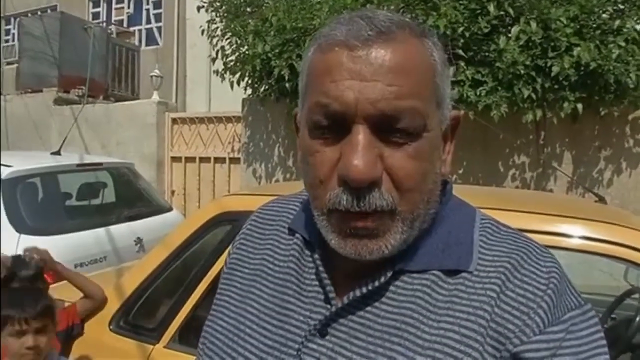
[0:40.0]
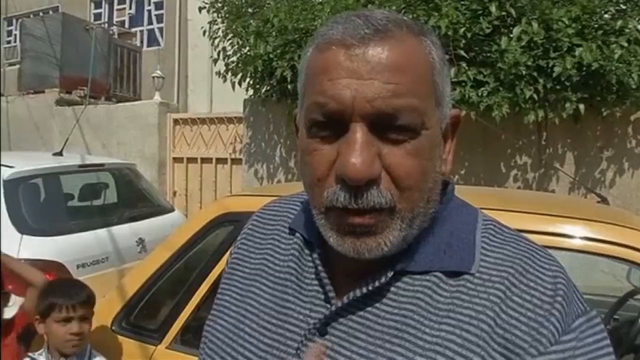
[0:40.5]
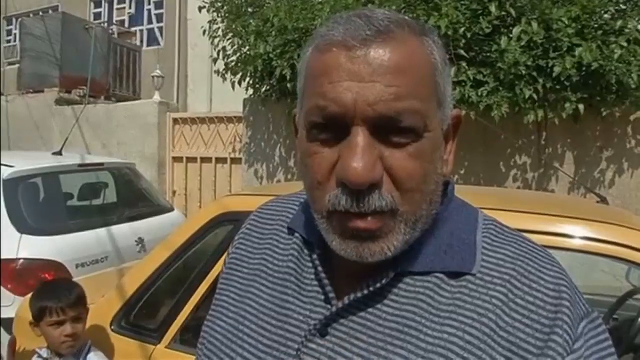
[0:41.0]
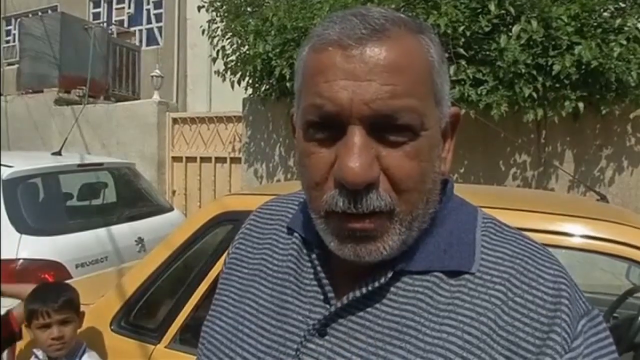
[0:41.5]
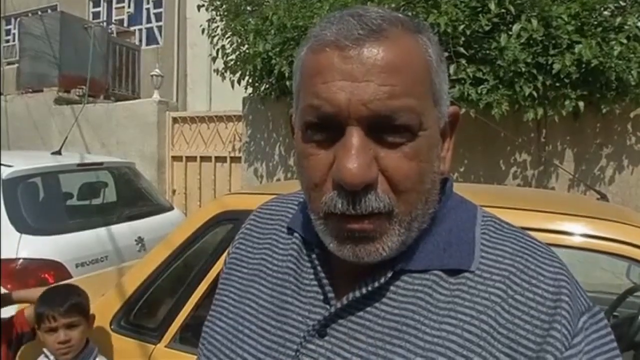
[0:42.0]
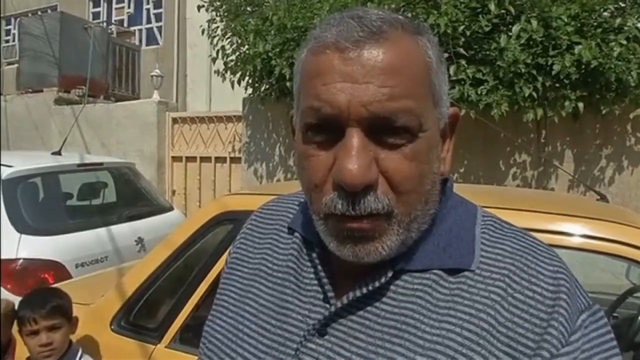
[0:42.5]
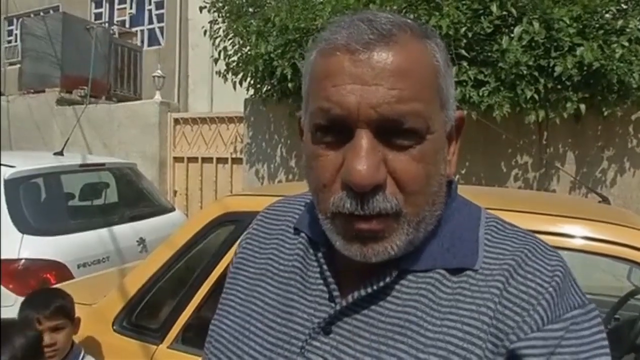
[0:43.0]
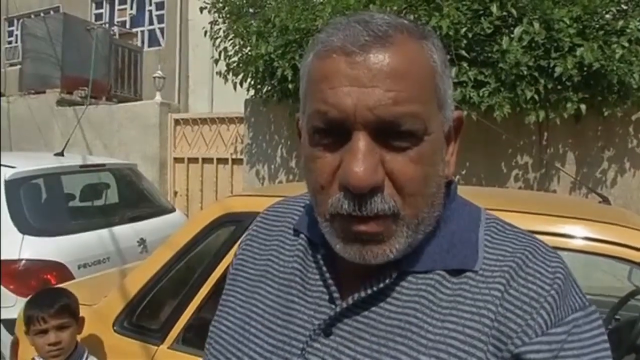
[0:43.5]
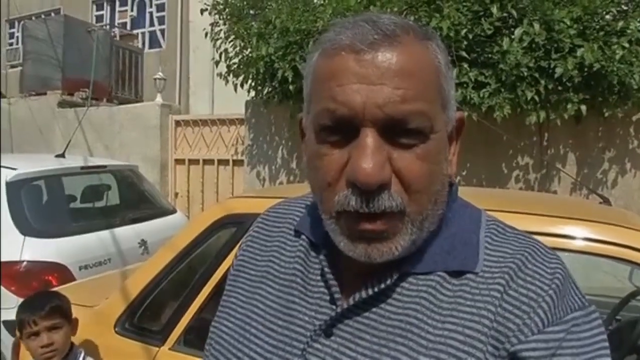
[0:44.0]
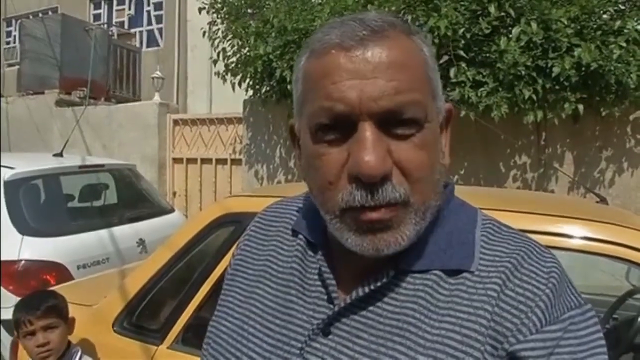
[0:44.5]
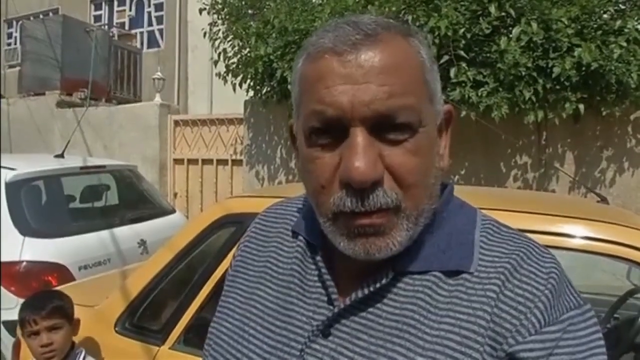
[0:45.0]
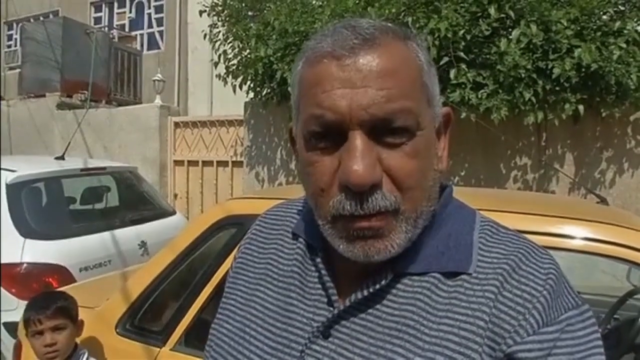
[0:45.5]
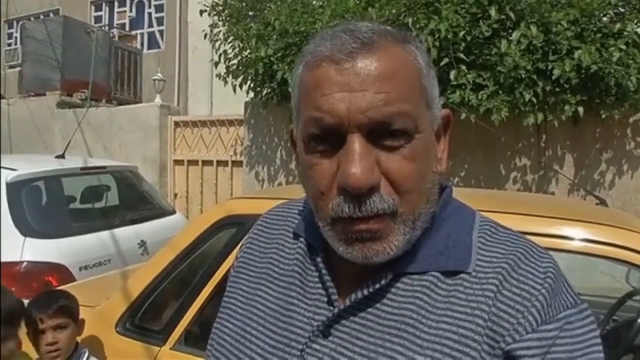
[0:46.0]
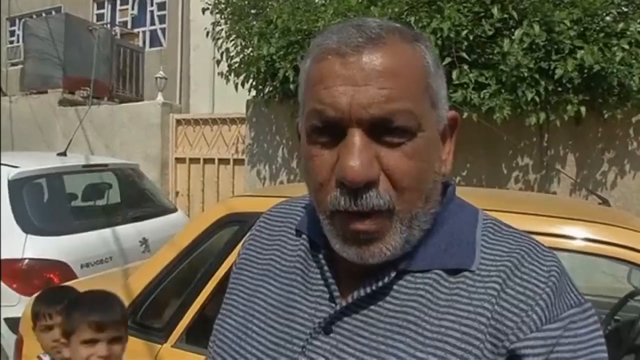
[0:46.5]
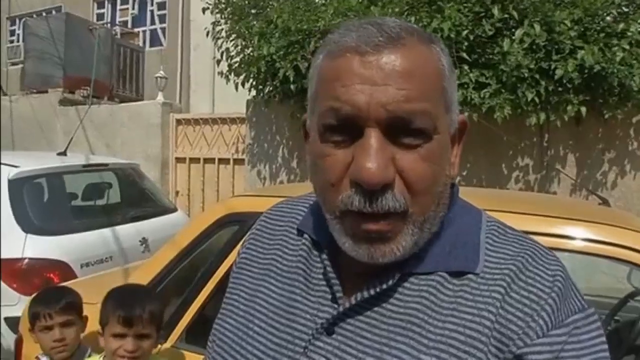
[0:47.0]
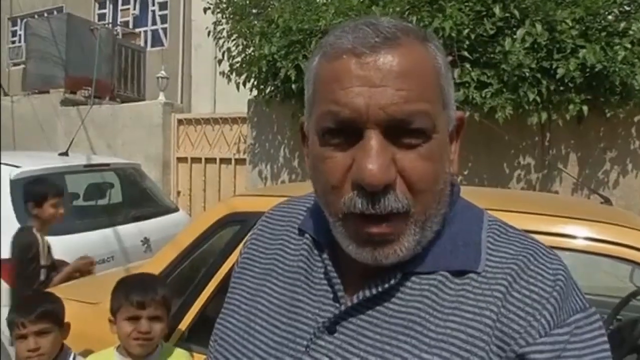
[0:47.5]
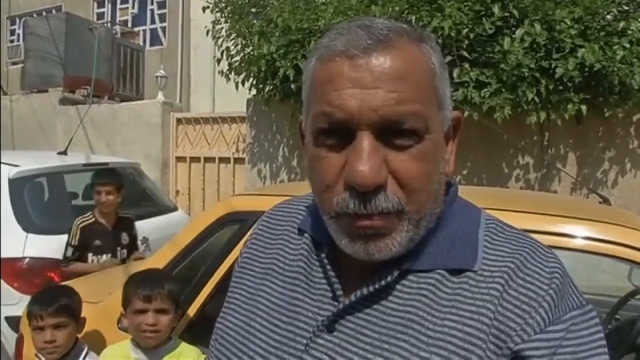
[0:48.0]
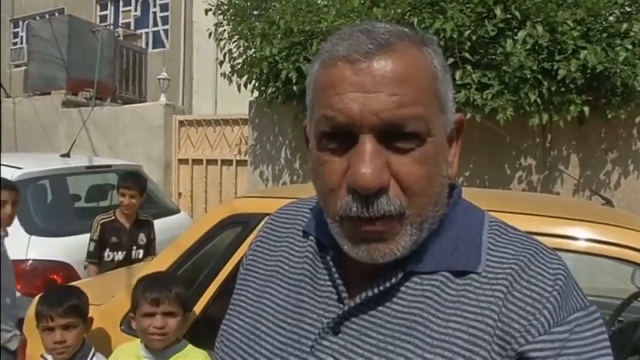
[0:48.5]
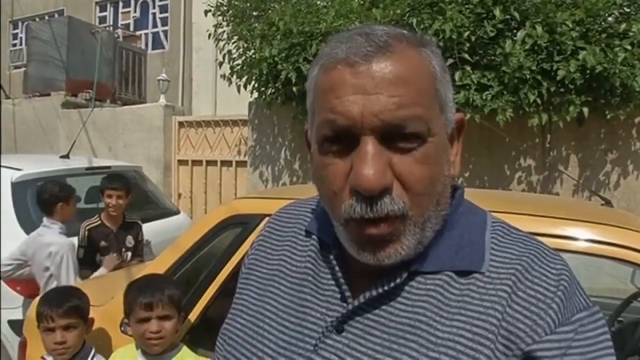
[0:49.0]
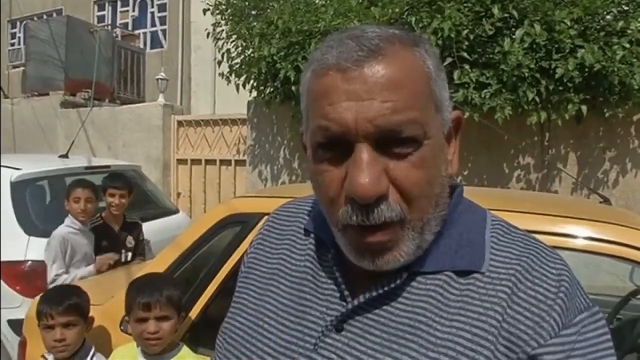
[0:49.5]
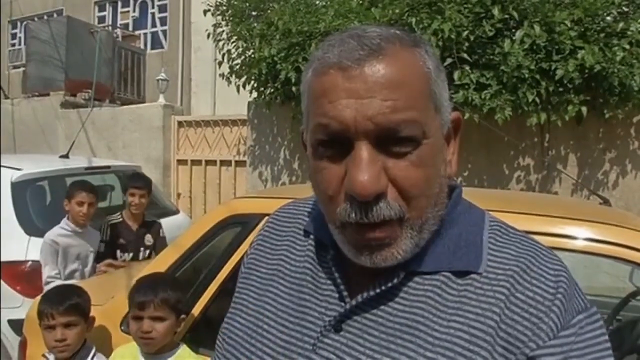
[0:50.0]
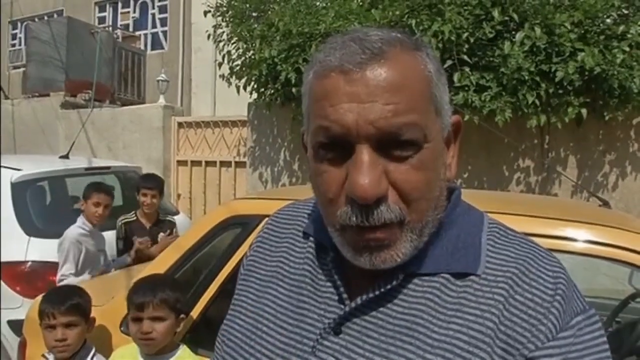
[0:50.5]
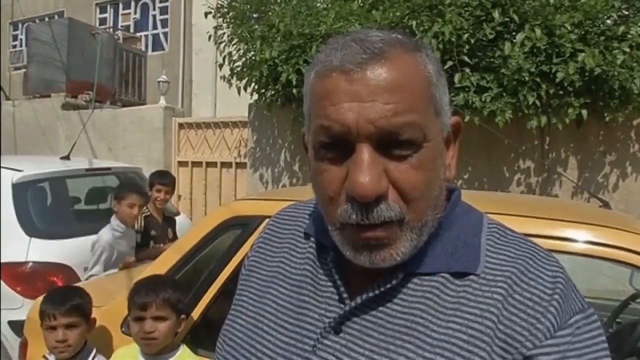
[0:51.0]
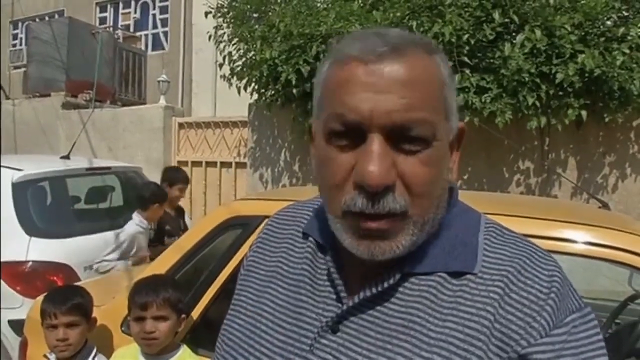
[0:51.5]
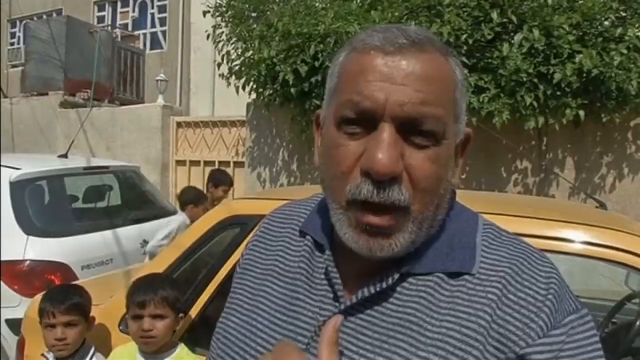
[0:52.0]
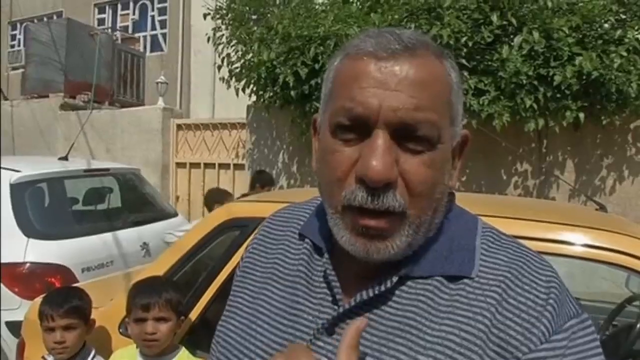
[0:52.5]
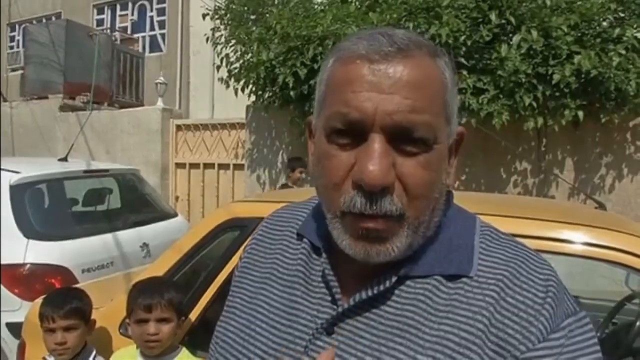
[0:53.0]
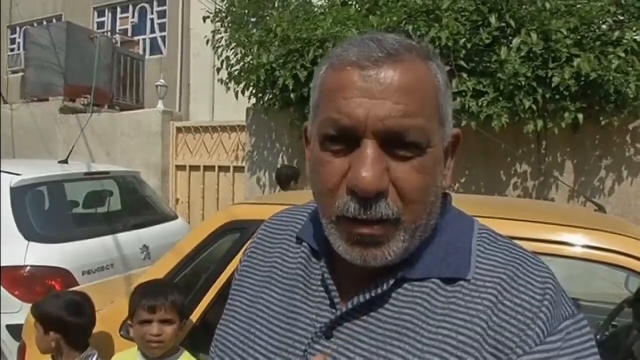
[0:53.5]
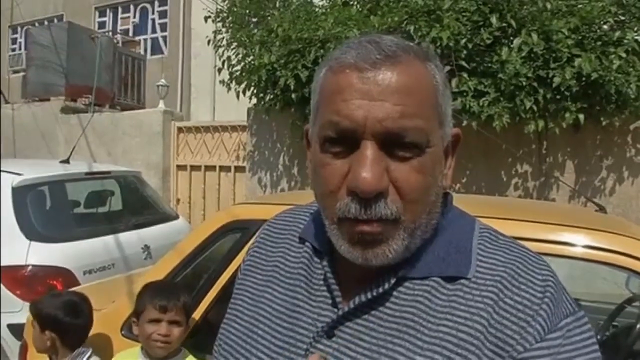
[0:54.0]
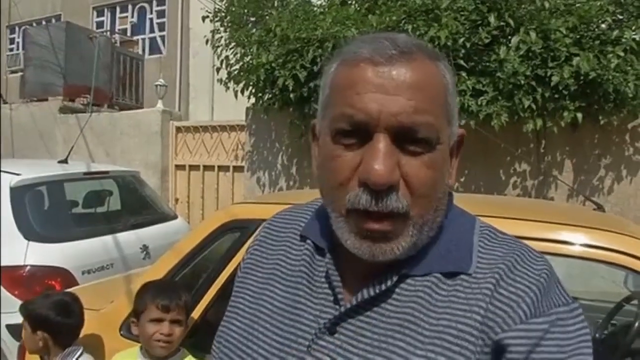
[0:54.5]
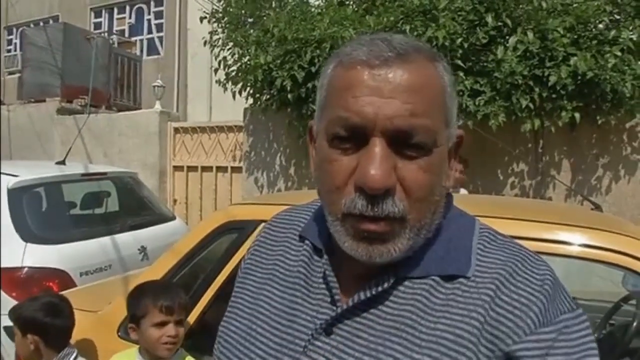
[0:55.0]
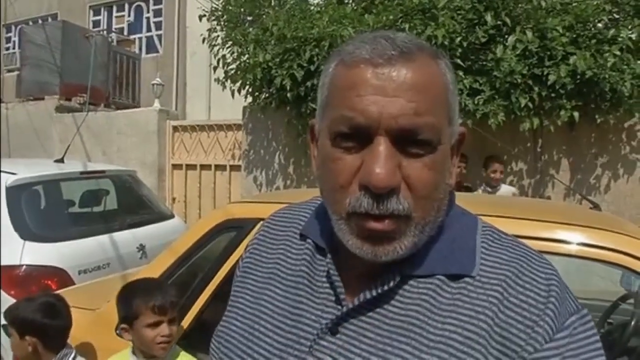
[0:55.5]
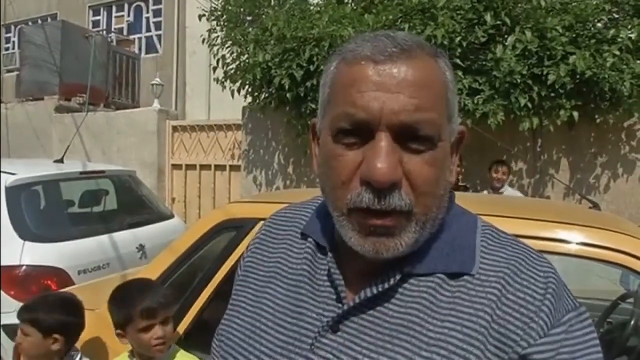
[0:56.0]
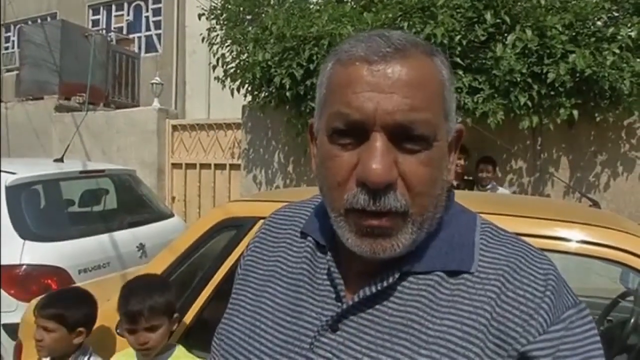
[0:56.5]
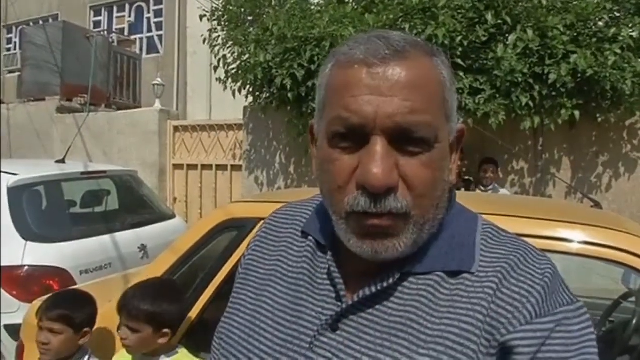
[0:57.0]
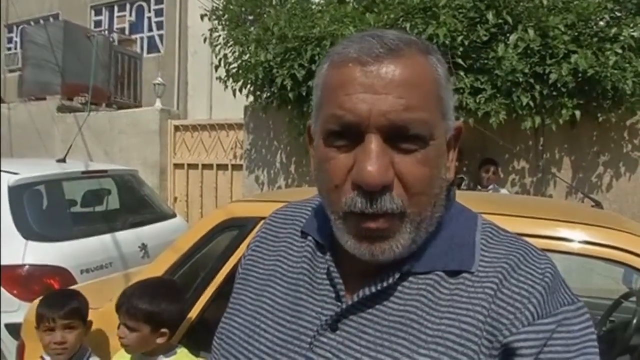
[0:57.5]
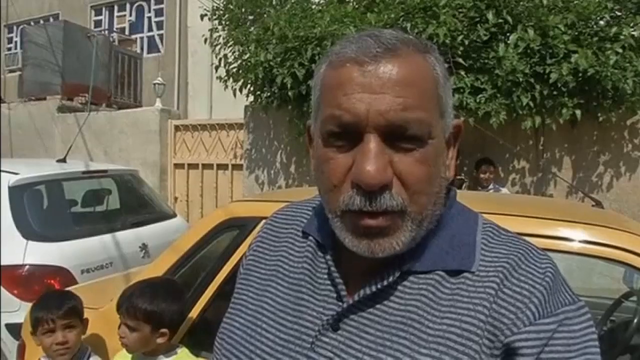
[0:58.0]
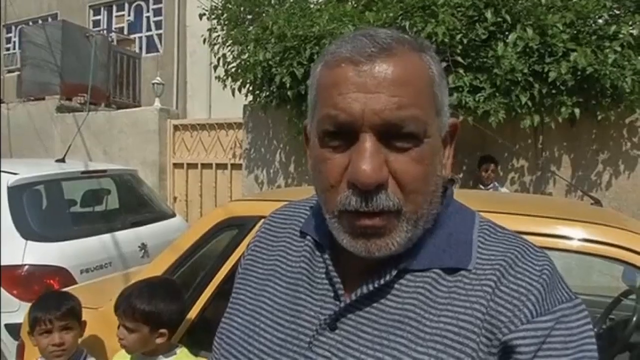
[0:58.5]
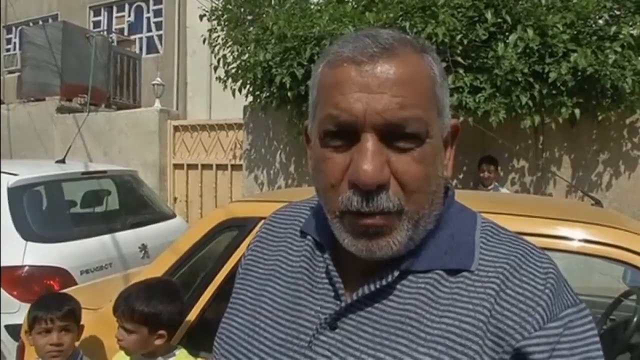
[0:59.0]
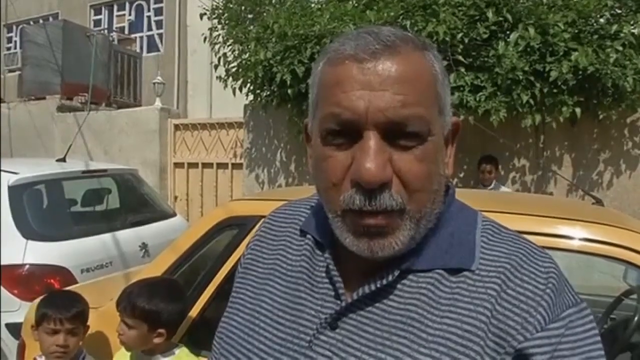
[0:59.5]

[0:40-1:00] The man keeps talking, with the yellow car behind him. There are some children in the bottom left corner, and behind the two cars there is a building; they appear to be some homes. A green bush in the top right of the background hangs from what looks like one of the homes. More children appear in the background on the left, and two children are in between the yellow and white cars. As the man continues talking, the two children move to the right in the background behind the yellow car and look toward the camera. The man in the blue and white shirt keeps talking, and it appears that someone is interviewing him.